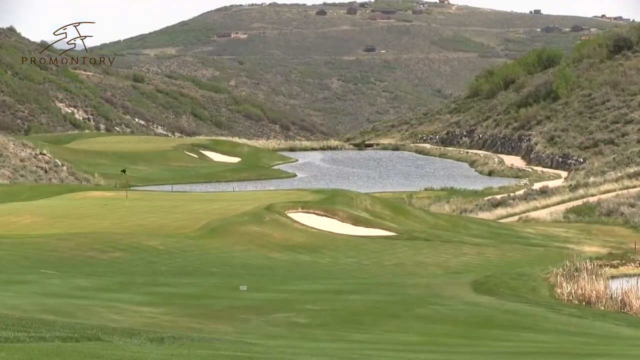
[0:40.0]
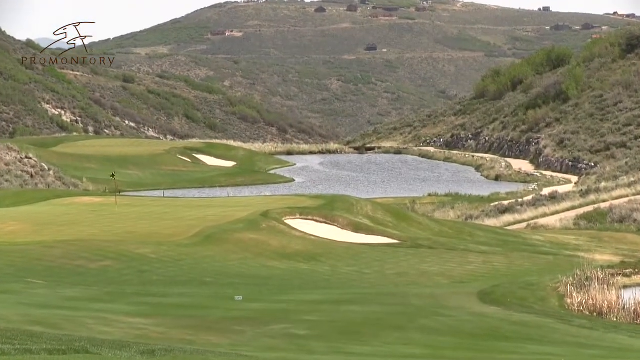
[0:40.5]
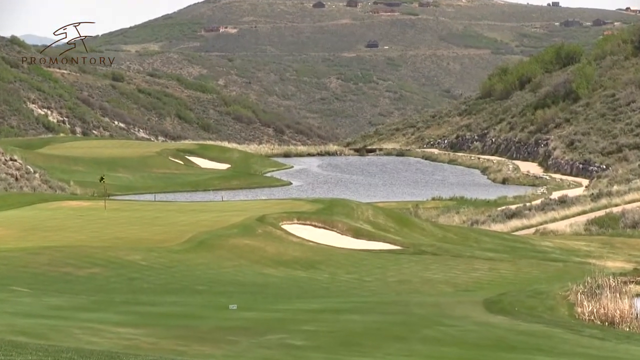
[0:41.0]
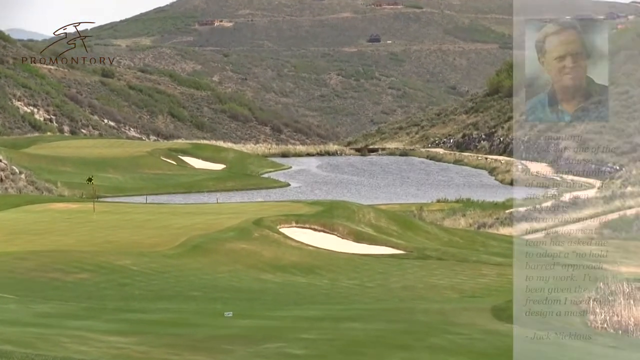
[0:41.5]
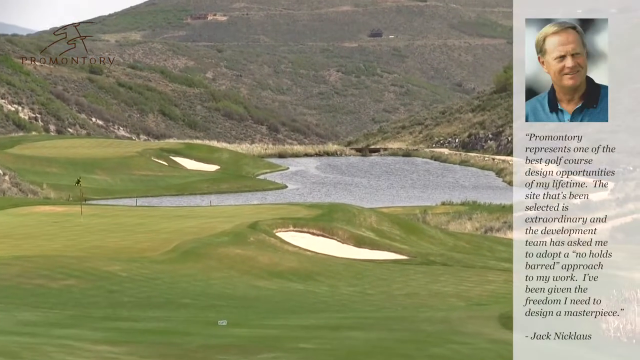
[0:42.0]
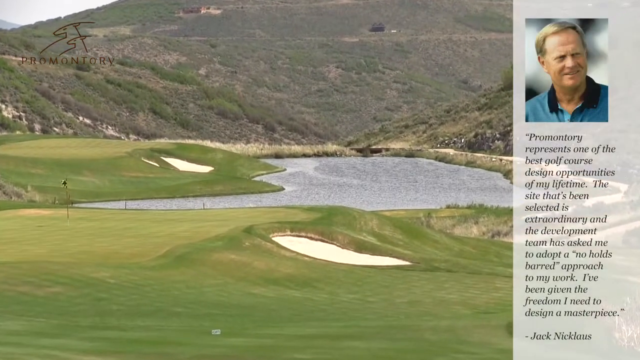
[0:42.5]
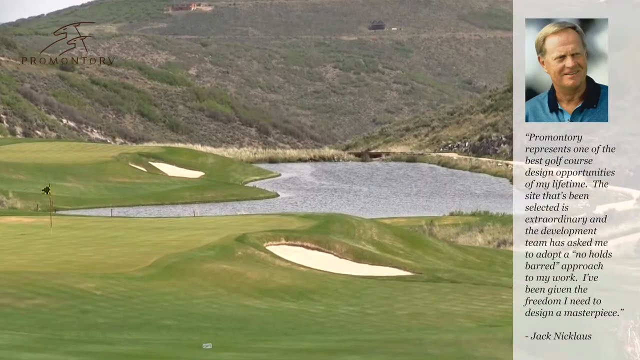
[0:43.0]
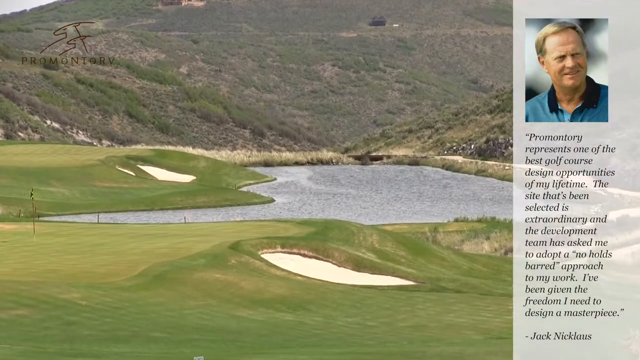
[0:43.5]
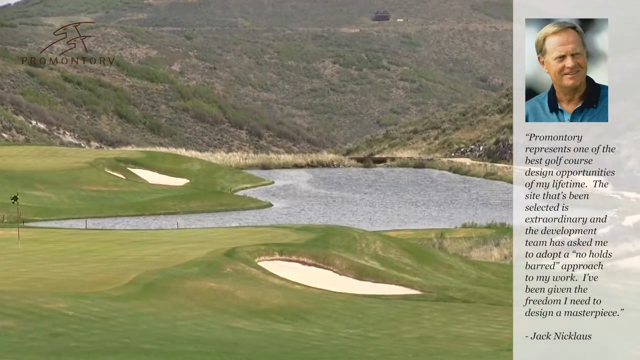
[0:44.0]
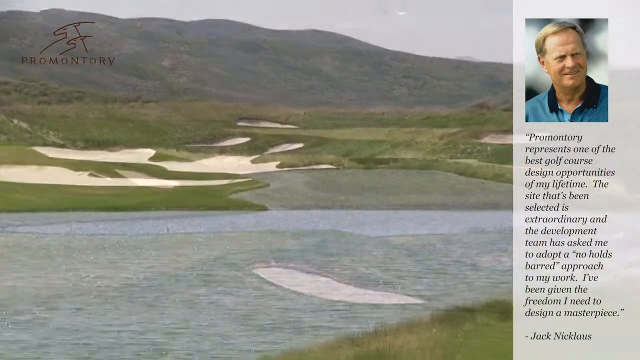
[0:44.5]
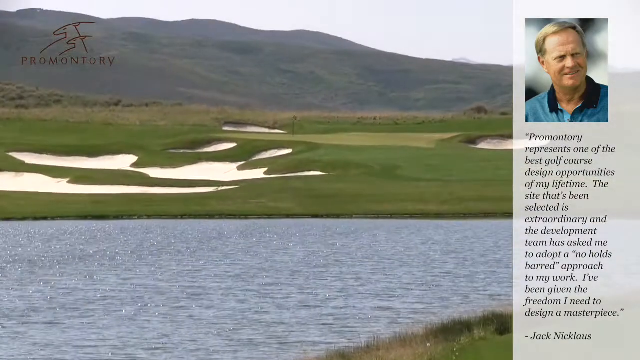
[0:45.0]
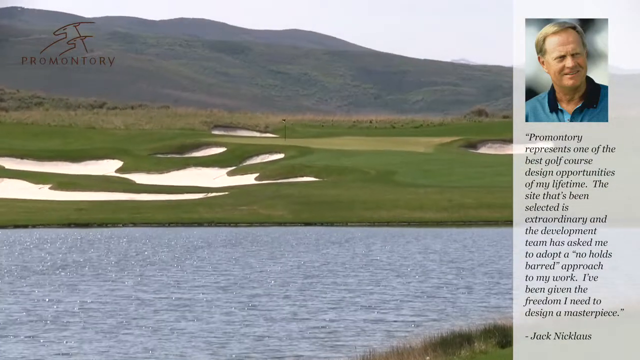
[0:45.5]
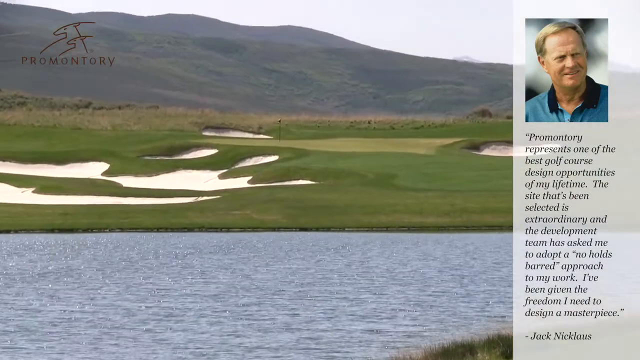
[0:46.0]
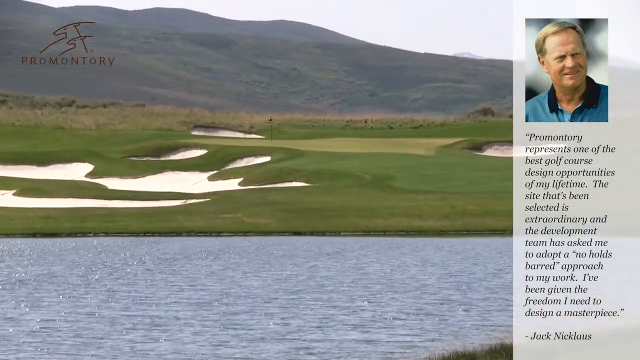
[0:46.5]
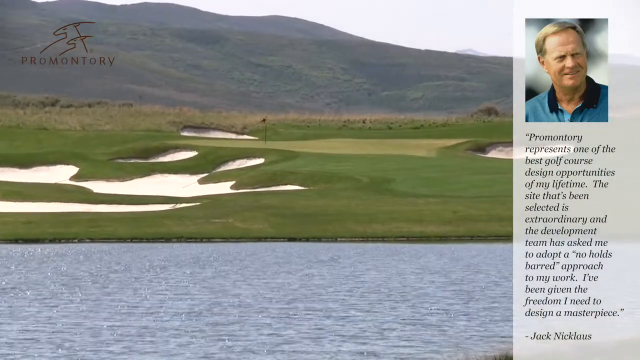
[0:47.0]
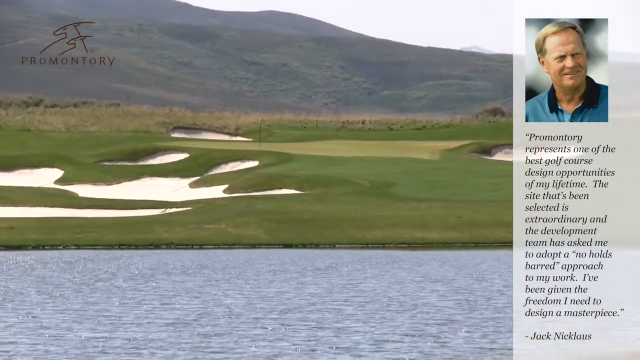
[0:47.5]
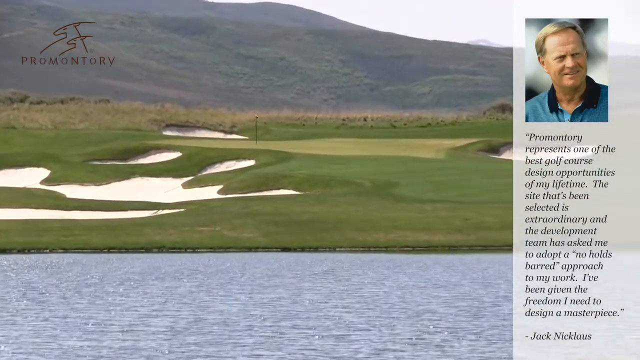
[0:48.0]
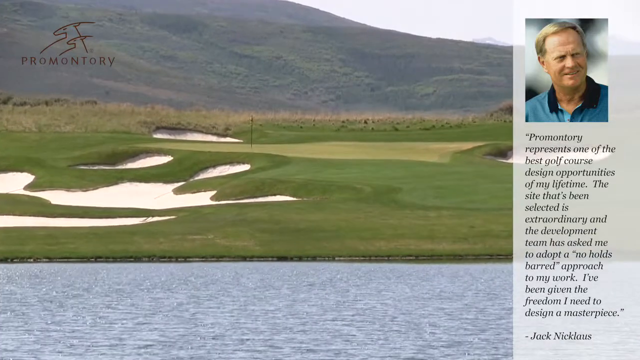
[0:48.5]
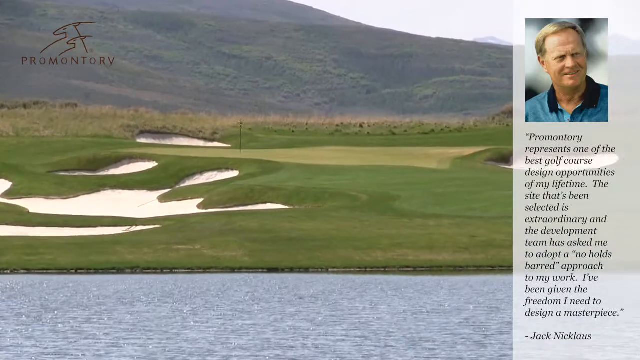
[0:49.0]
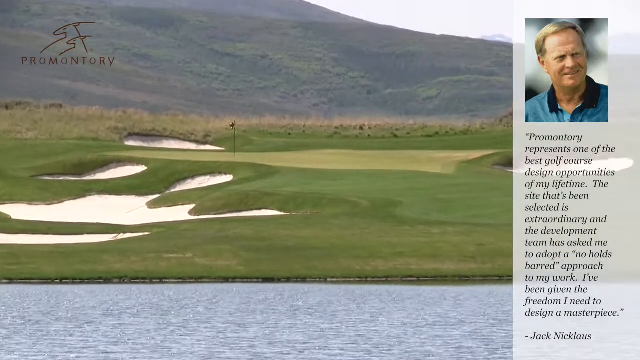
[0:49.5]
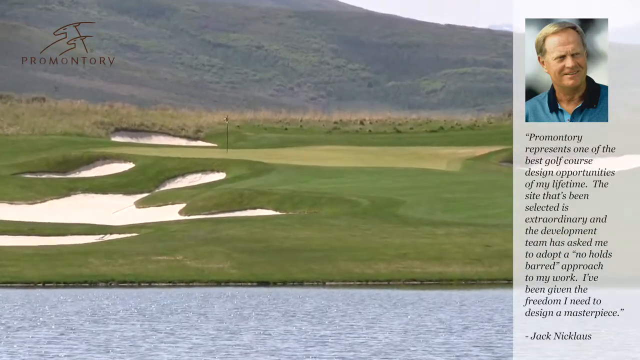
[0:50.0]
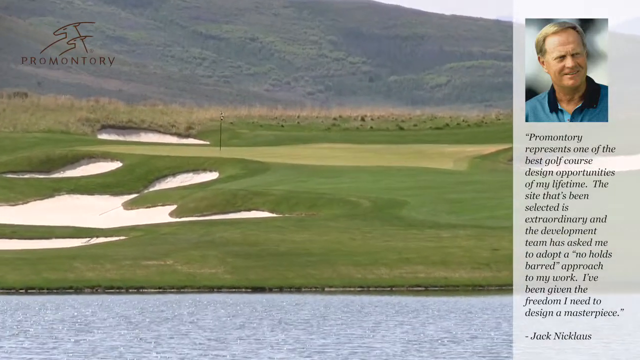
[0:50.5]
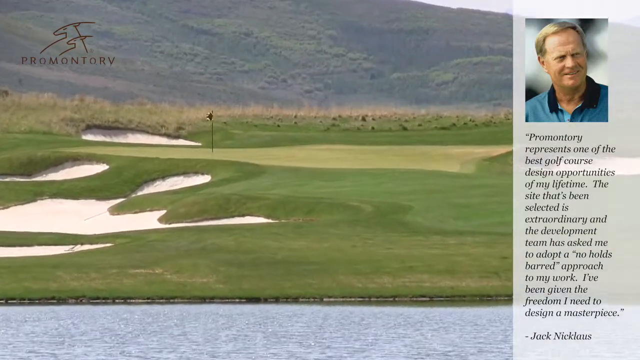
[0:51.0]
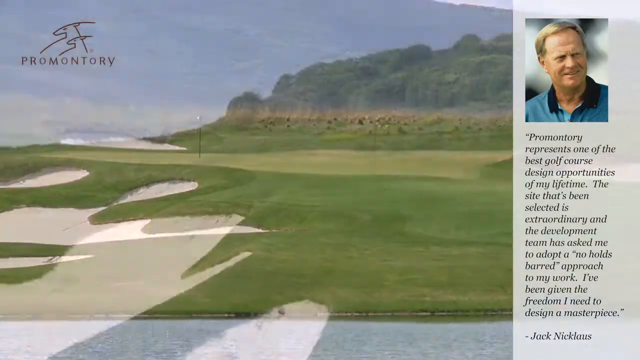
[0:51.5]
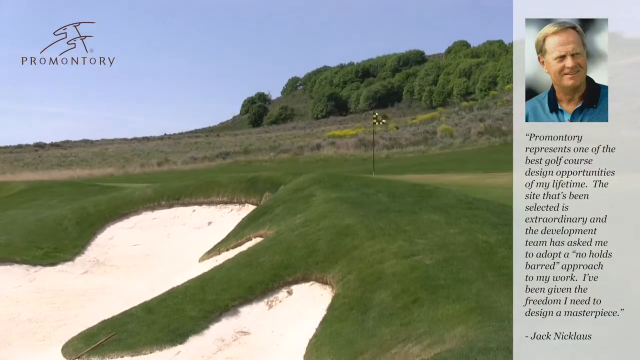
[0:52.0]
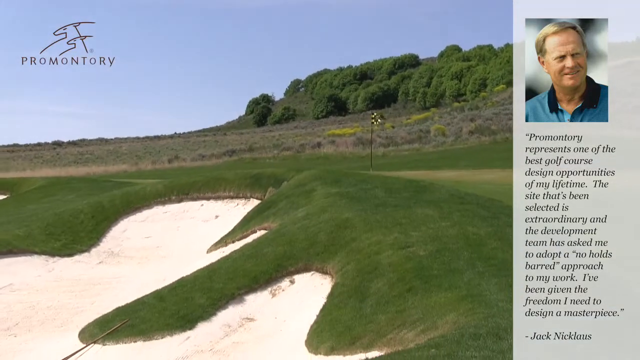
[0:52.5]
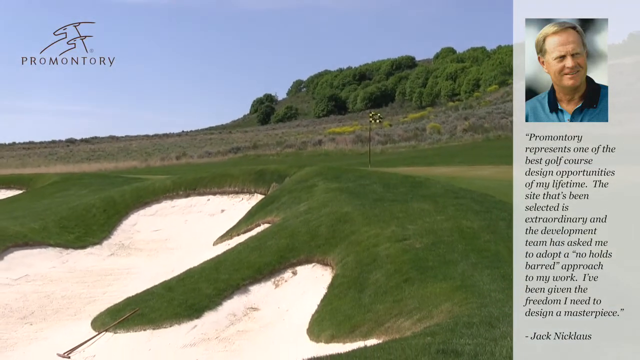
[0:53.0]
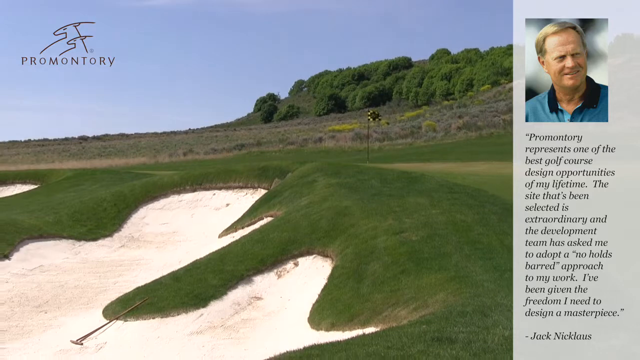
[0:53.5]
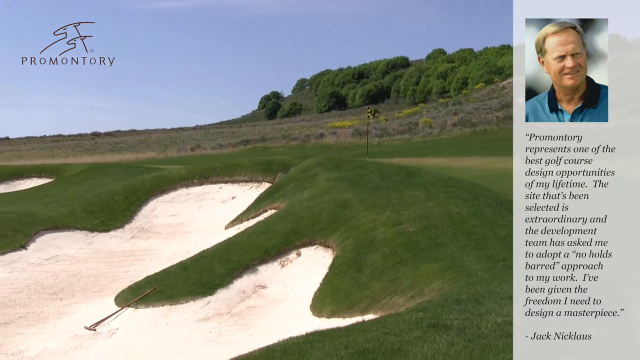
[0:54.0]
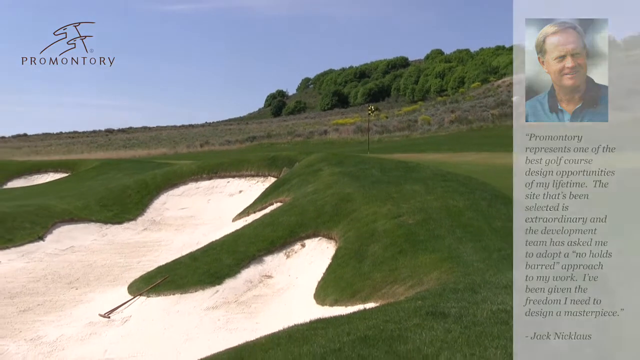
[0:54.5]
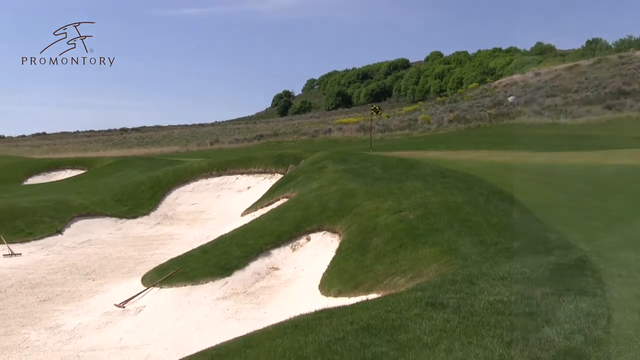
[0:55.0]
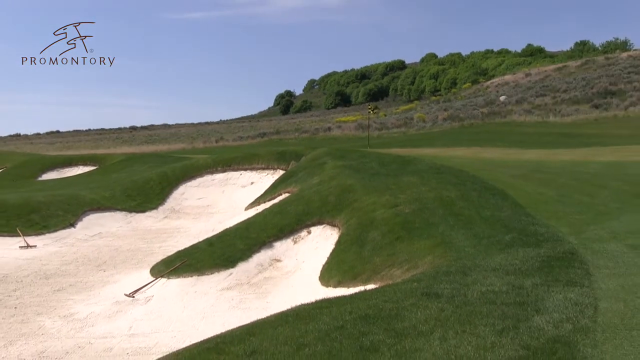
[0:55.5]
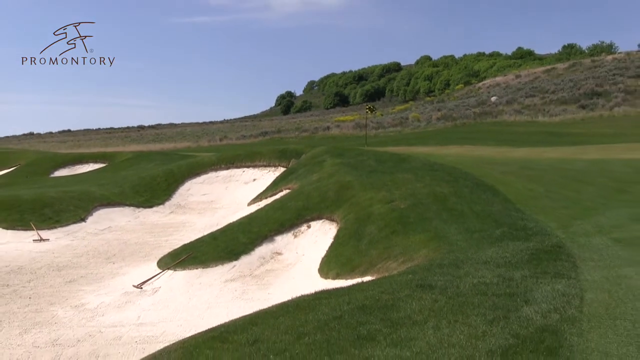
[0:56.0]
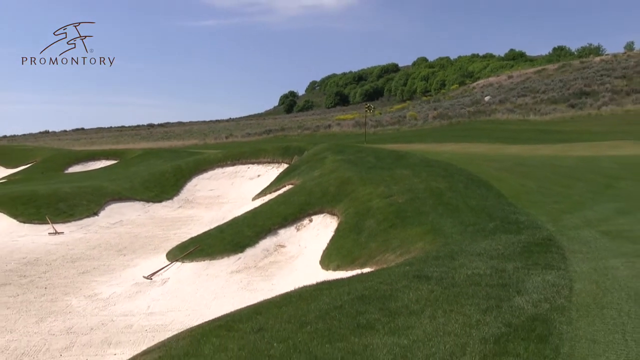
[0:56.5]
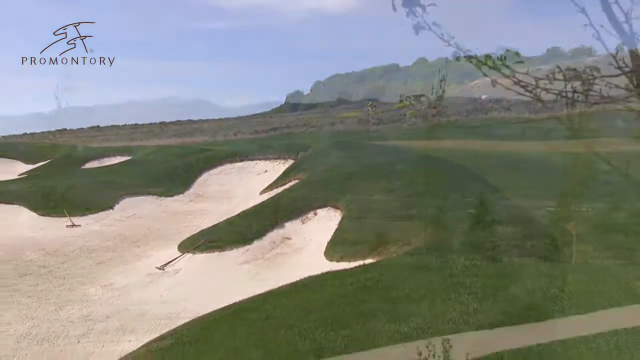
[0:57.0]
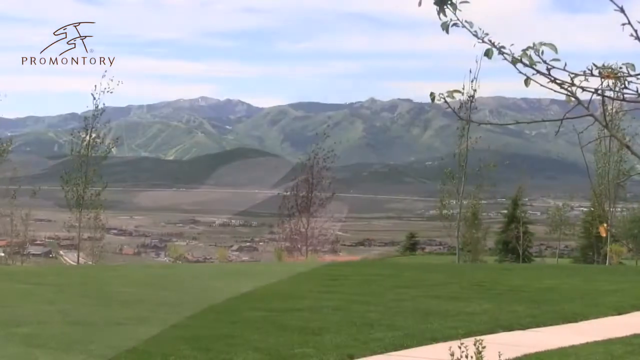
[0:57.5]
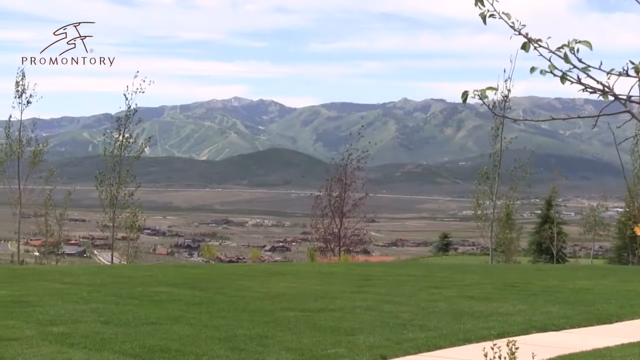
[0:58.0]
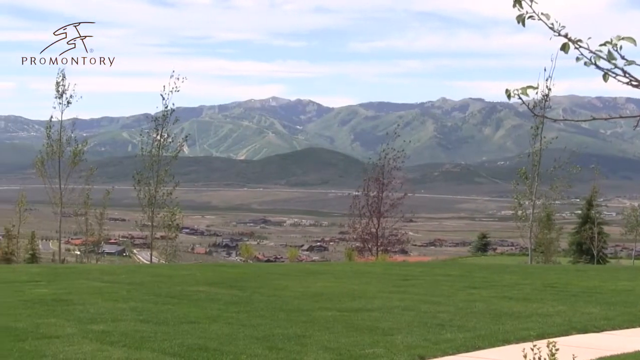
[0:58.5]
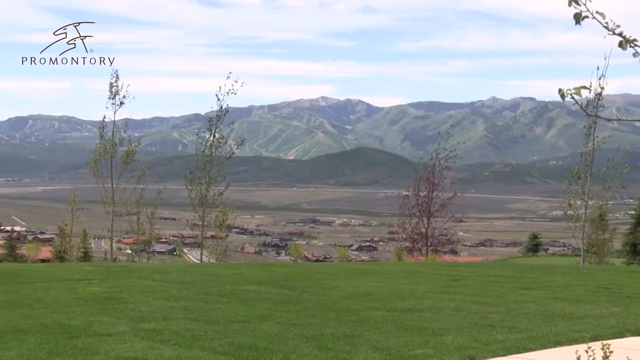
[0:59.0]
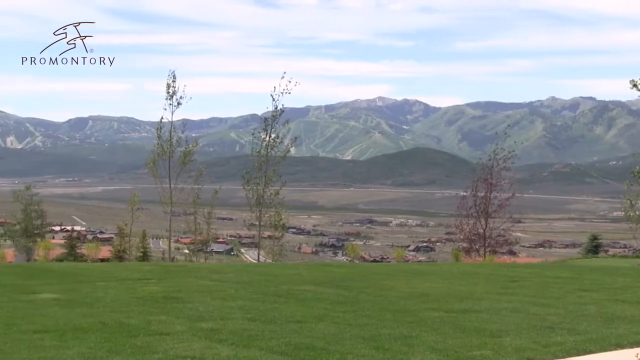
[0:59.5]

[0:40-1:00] The camera pans toward a pond or small lake in the middle of the golf course. There are two sand pits, the grass is green and shorn, and a flag waves on the left side. Mountains with sagebrush are behind it; the mountains are brown and green. On the right is a photo of Jack Nicklaus wearing an aqua-colored polo shirt with a dark blue collar, with text that says: "Promontory represents one of the best golf course design opportunities of my lifetime. This site has been selected as extraordinary and the development team has asked me to adopt a no-holds-barred approach to my work. I've been given the freedom I need to design a masterpiece." The camera shows another angle with the pond in the foreground, many sand pits on the left, and the green with the flag near the hole. The course appears to have some challenges, with some of the green made up of small hills. The camera then pans.